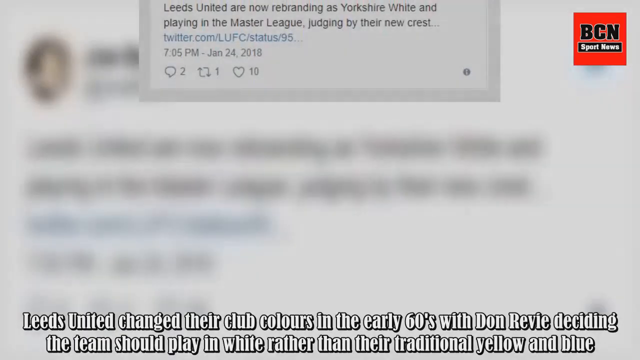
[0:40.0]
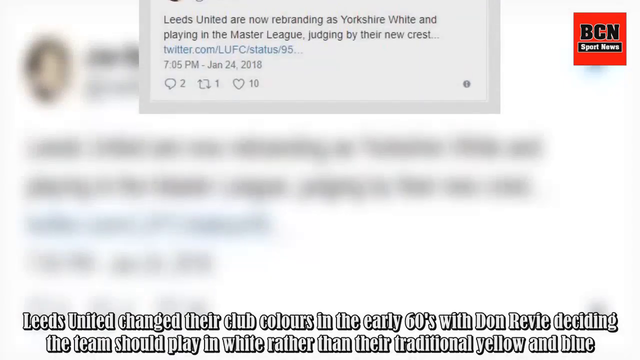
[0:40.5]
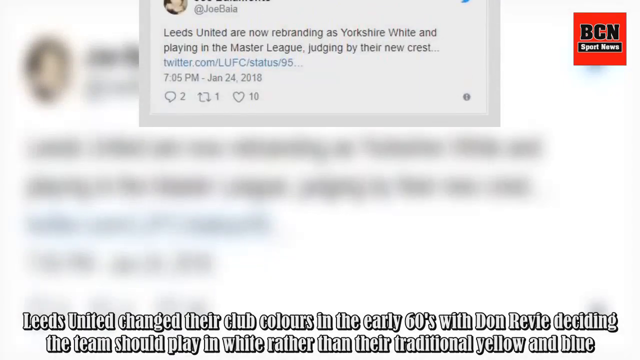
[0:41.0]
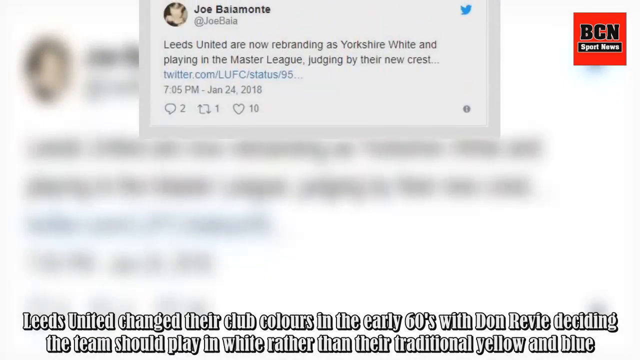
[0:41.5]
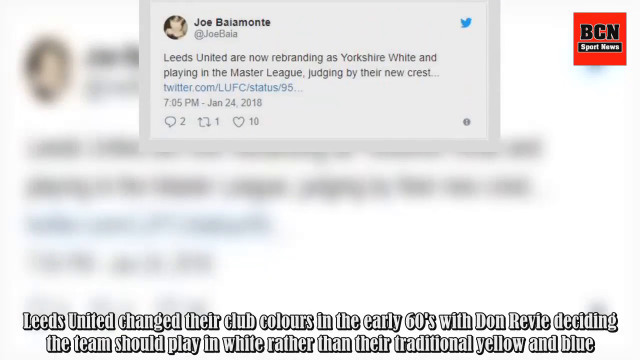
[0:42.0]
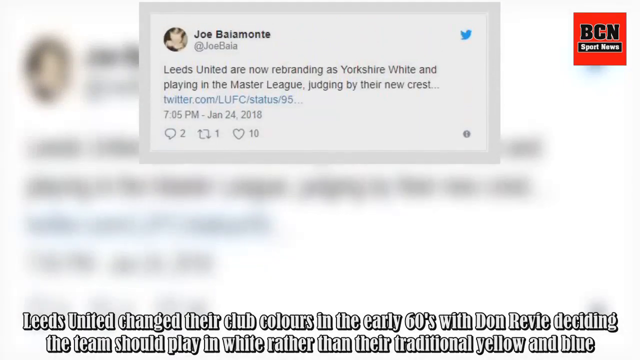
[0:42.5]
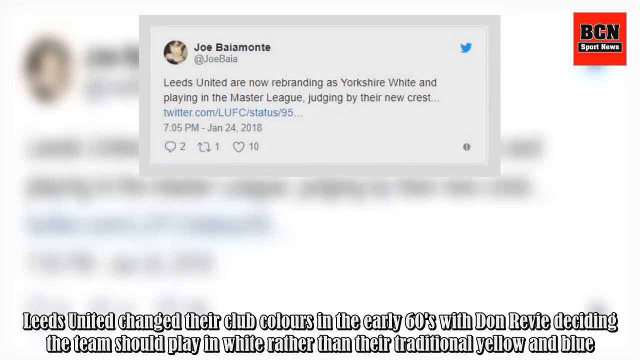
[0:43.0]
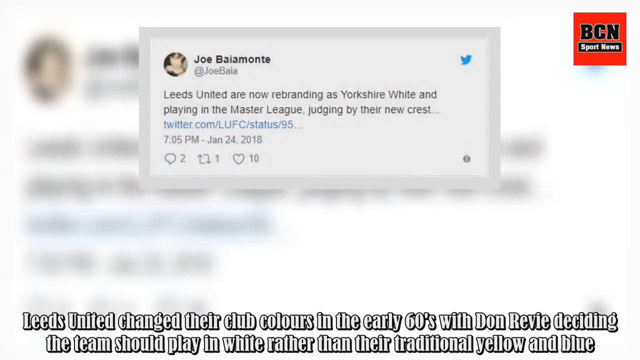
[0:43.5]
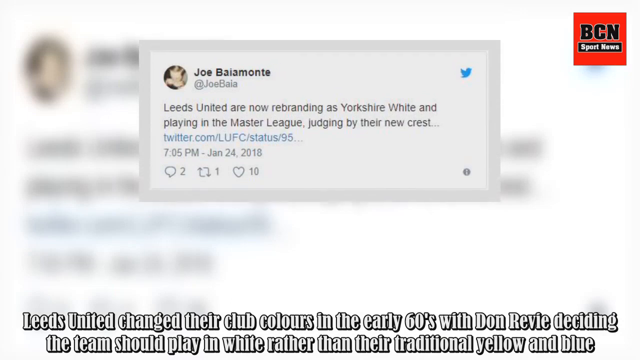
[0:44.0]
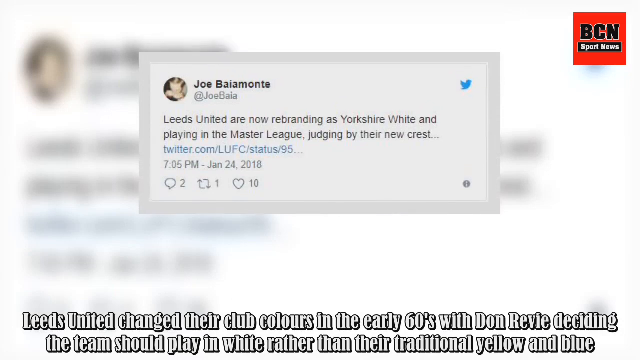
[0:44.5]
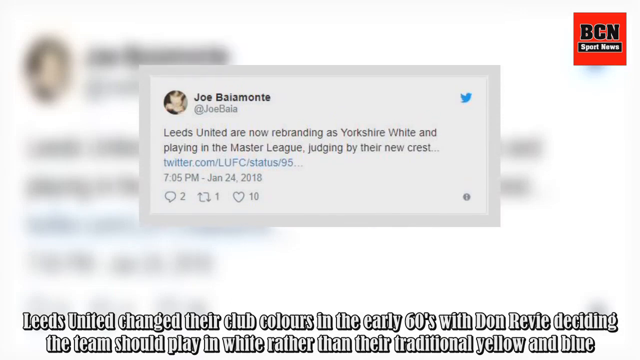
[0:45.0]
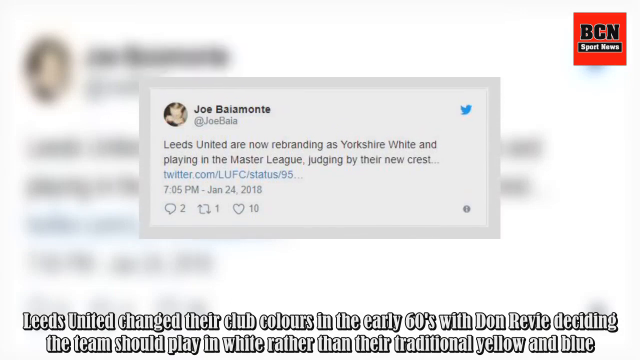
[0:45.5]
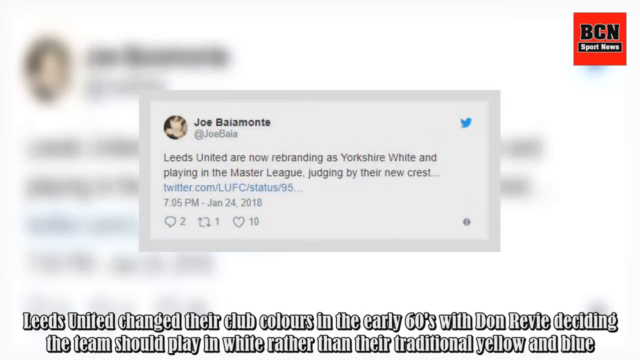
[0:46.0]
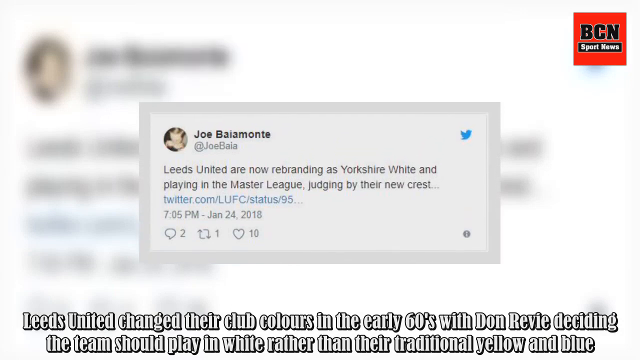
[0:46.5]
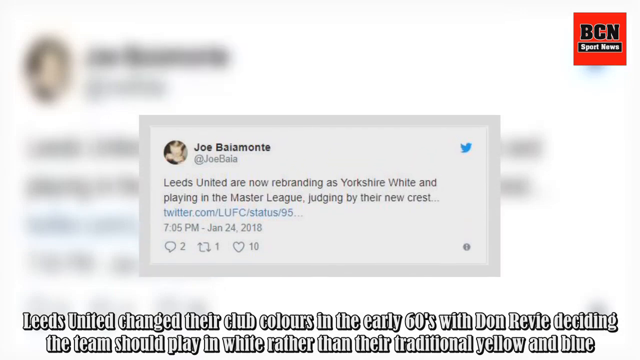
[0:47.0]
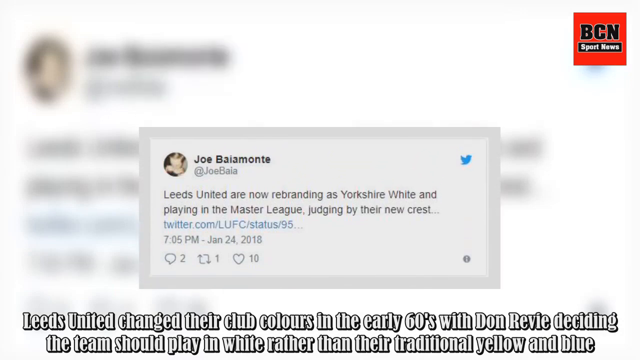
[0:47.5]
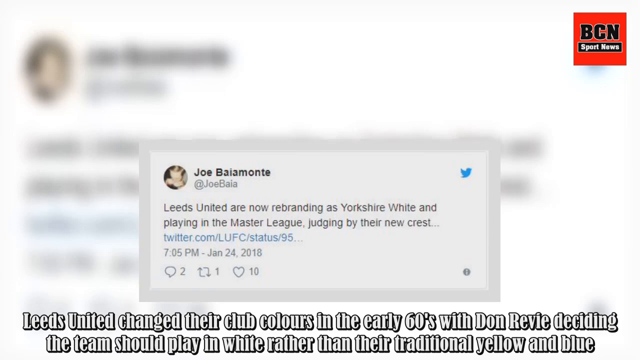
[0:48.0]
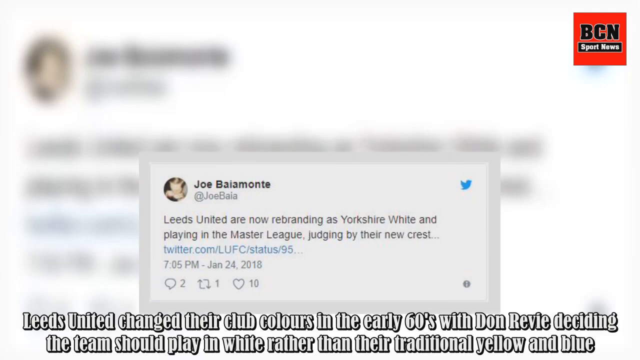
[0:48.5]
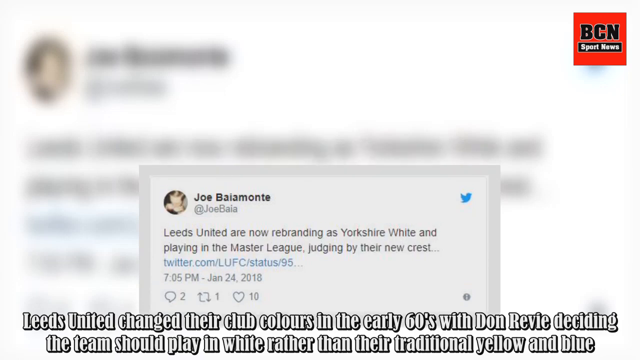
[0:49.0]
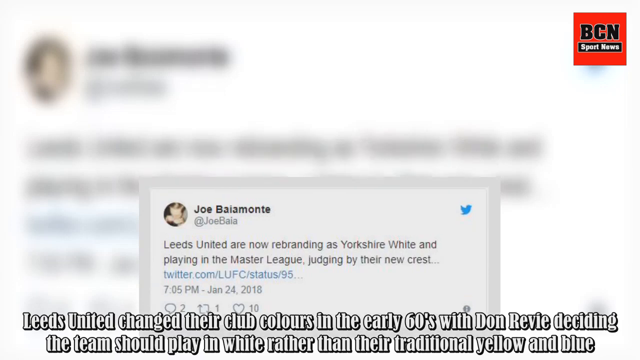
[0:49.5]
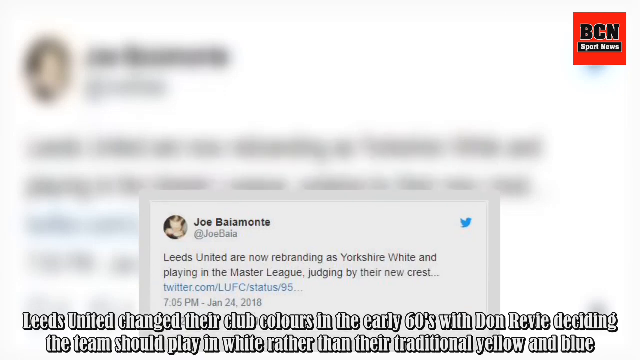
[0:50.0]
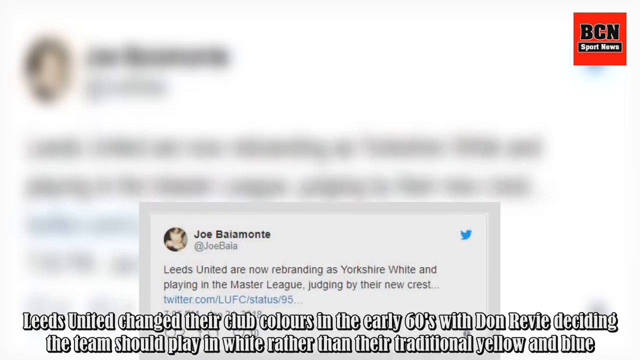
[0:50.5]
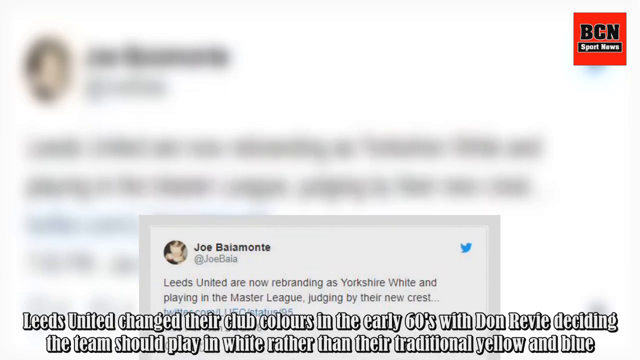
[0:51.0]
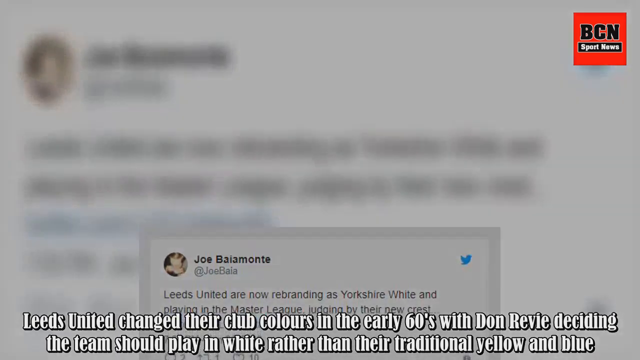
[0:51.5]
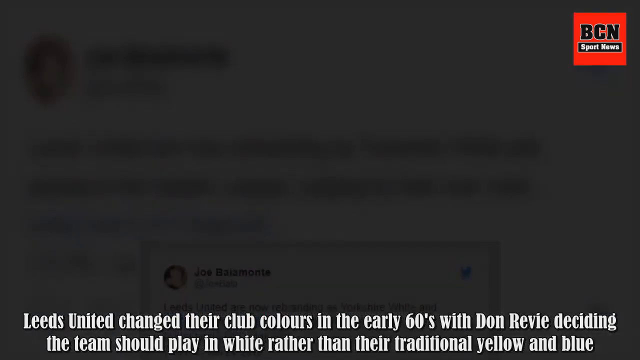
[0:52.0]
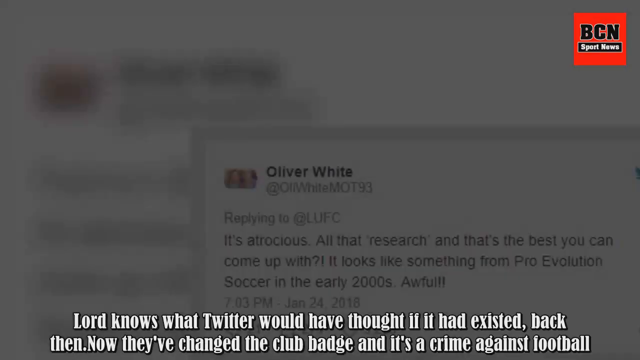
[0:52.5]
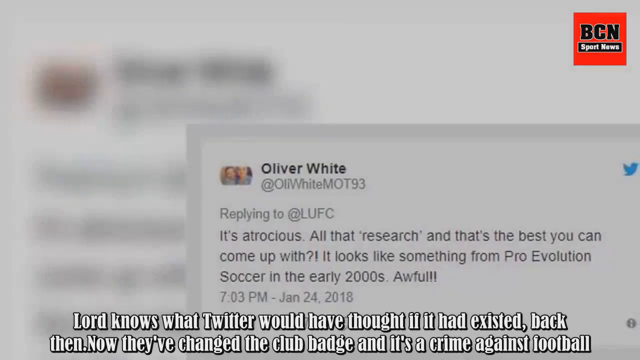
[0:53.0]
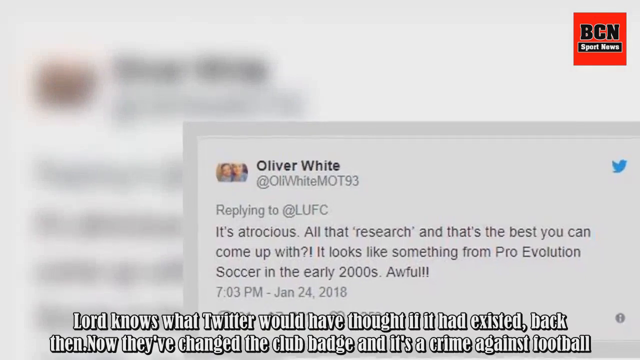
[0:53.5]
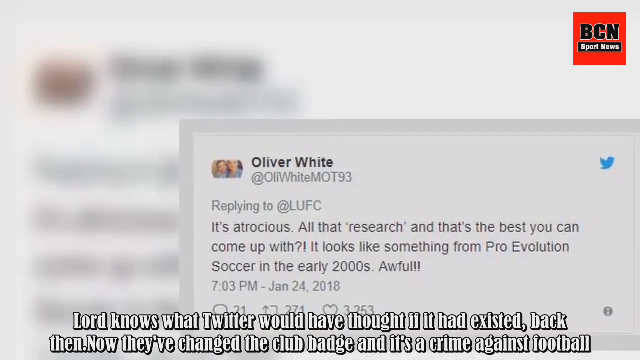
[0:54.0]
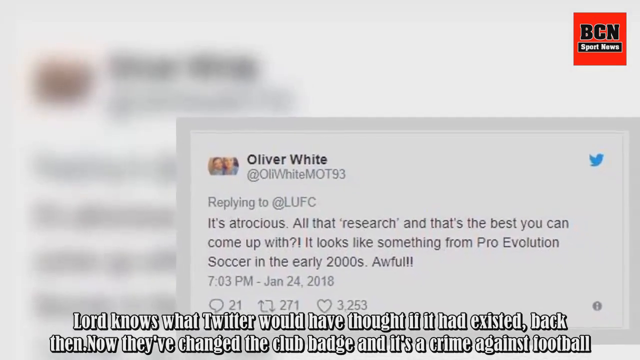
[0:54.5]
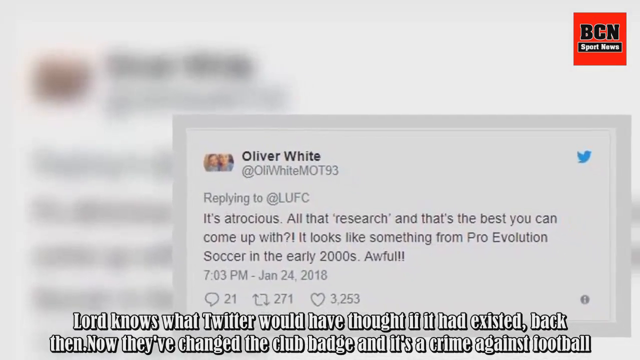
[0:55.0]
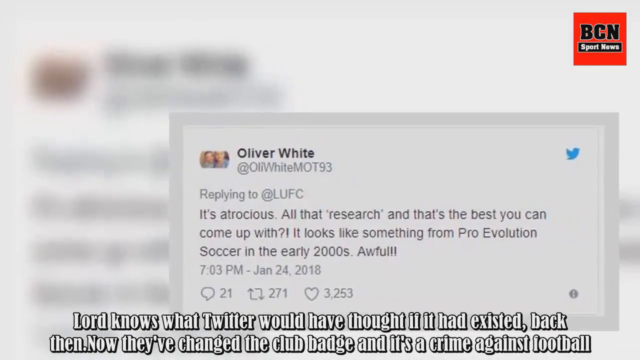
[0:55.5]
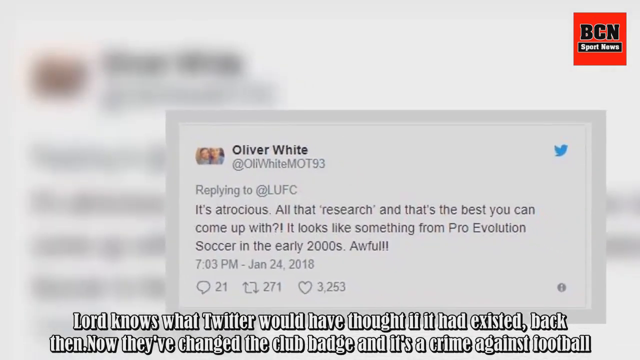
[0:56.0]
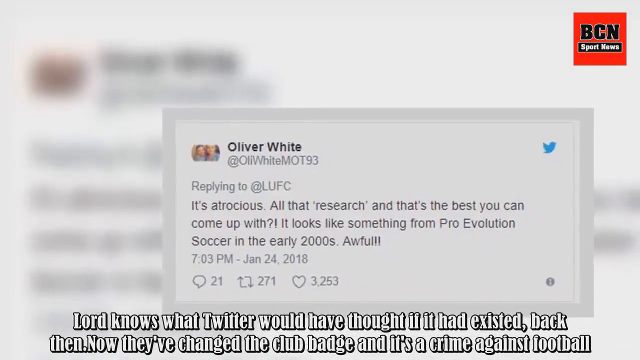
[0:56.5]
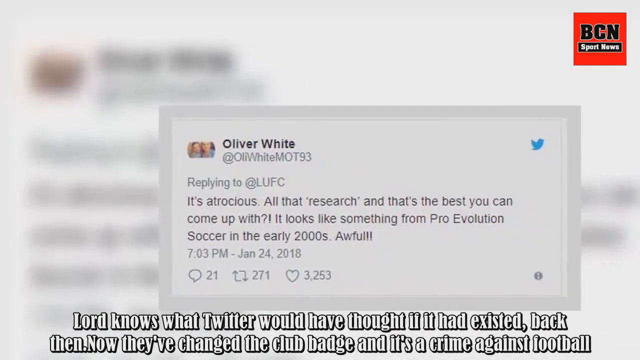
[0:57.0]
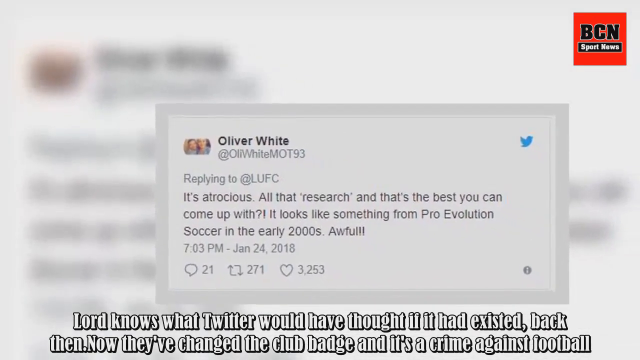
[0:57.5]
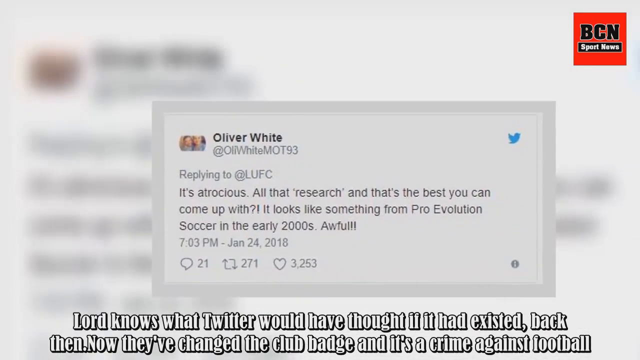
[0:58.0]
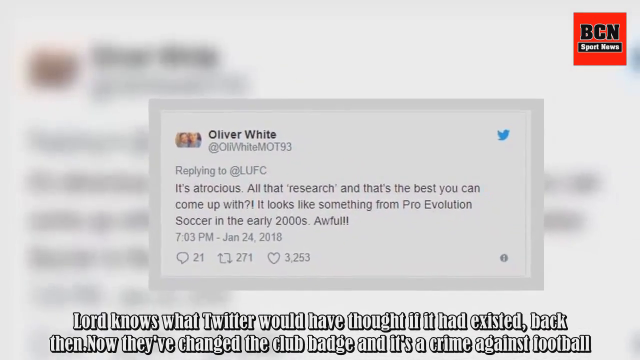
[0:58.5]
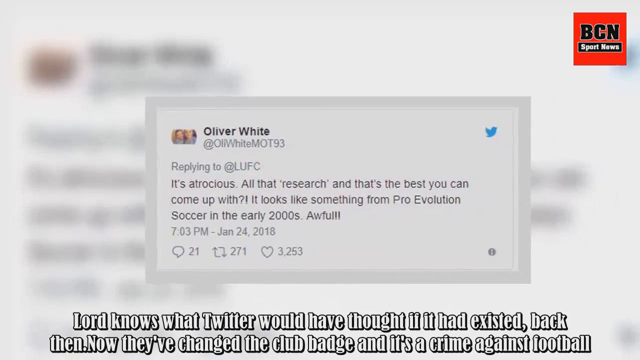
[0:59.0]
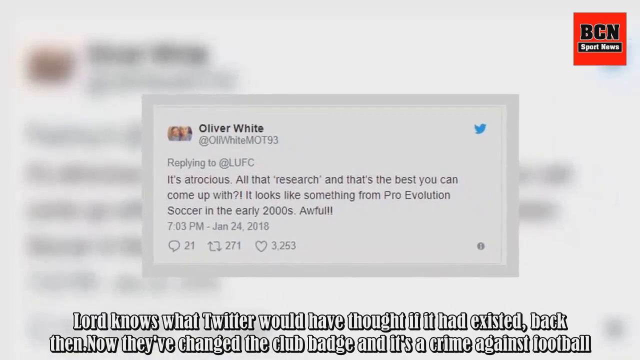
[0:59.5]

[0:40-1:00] A Twitter post that seems to be written by a person named Joe Balamonte moves from the top of the screen to the bottom. Behind it is the same post, blurred. White text at the bottom of the screen reads "Leeds United changed their club colors in the early 60s with Don Revy deciding the team should play in white rather than their traditional yellow and blue." The image fades to black, and a new Twitter post comes in as the camera zooms out, with the post in the middle of the screen. This one is written by Oliver White. White text beneath reads "Lord knows what Twitter would have thought if it had existed back" and continues.